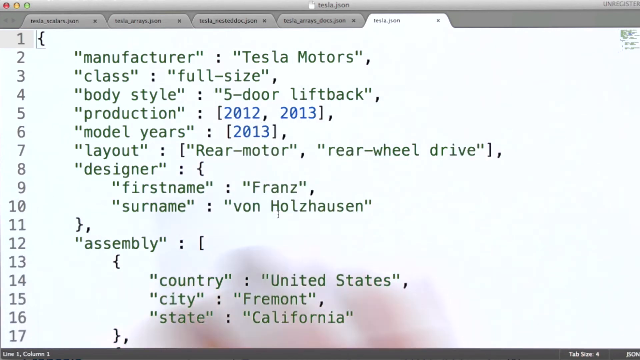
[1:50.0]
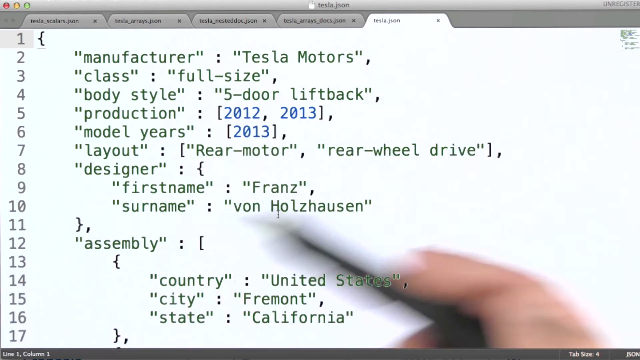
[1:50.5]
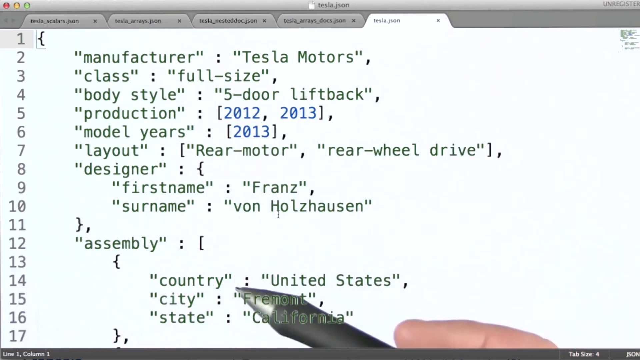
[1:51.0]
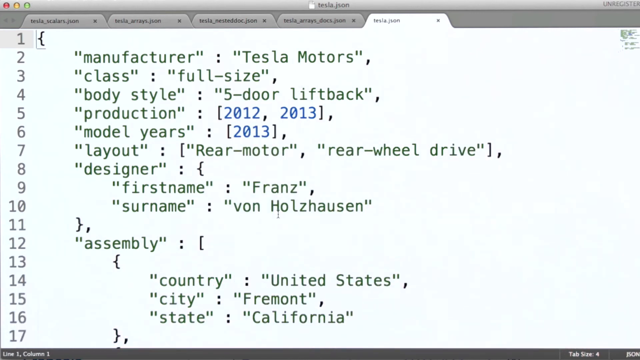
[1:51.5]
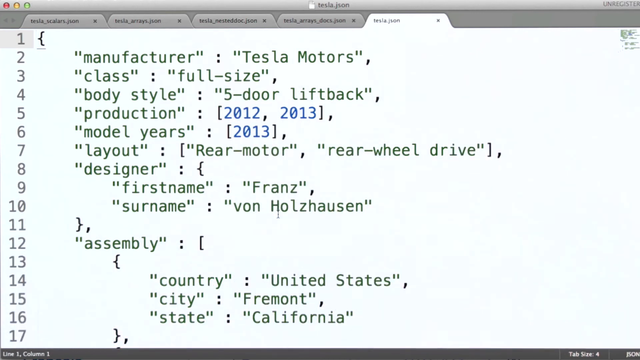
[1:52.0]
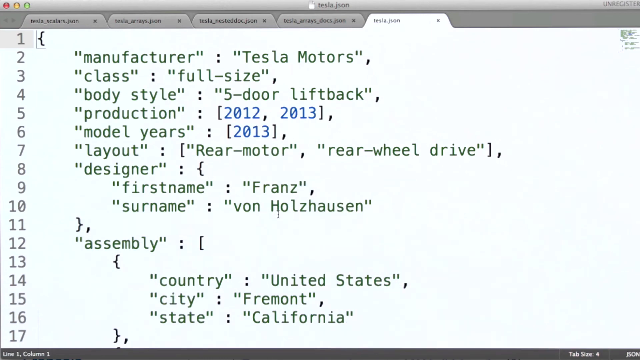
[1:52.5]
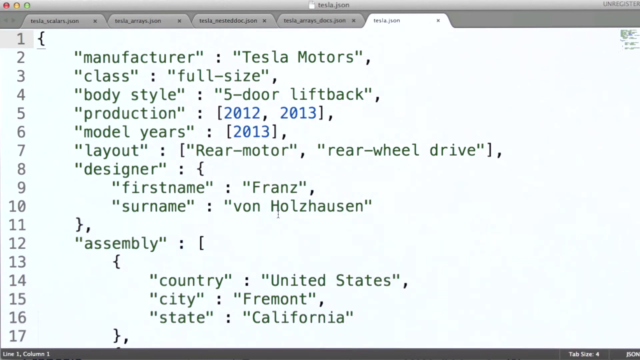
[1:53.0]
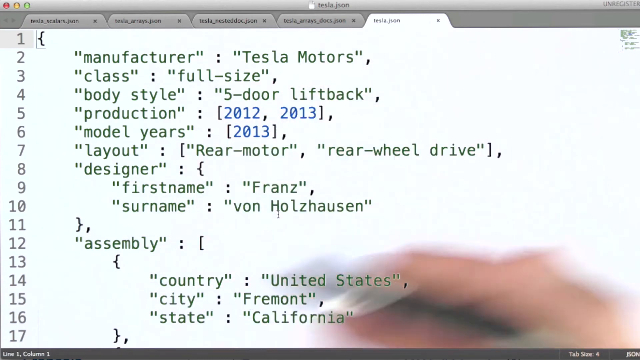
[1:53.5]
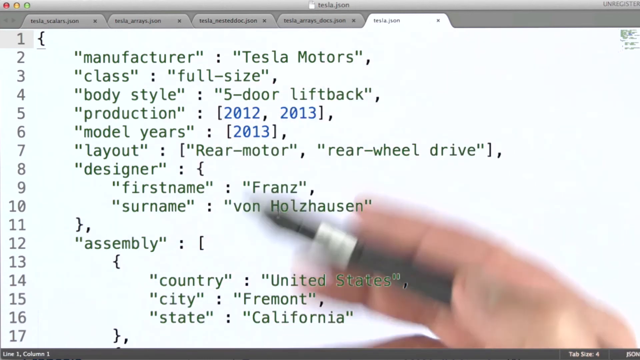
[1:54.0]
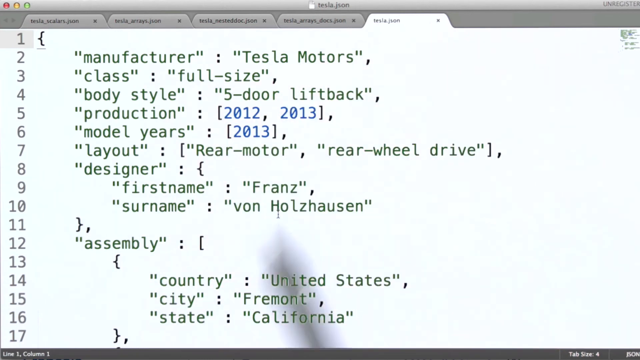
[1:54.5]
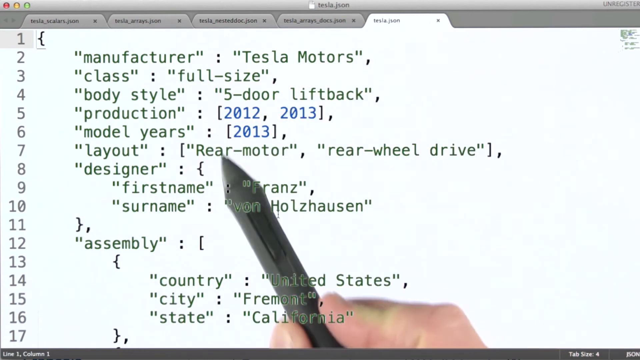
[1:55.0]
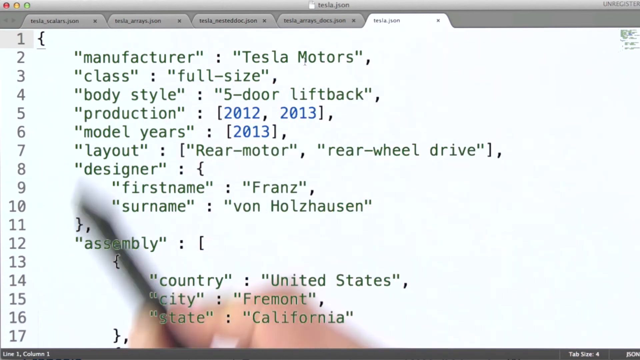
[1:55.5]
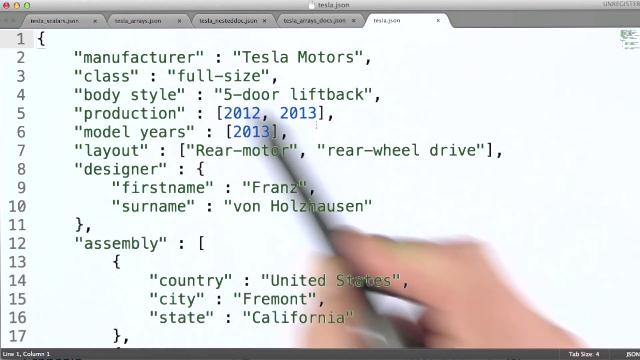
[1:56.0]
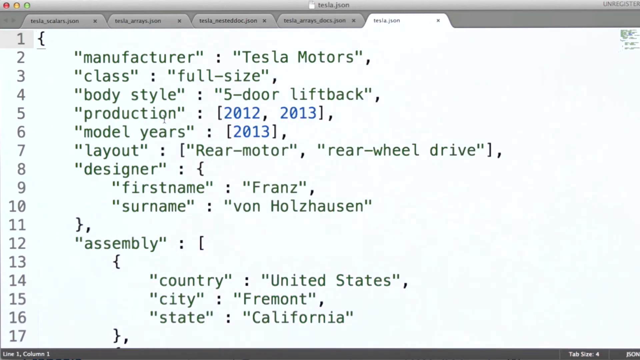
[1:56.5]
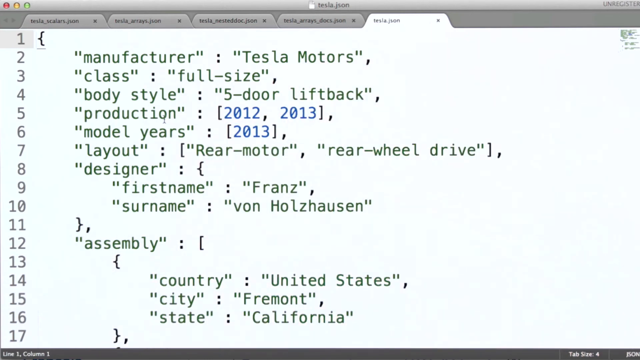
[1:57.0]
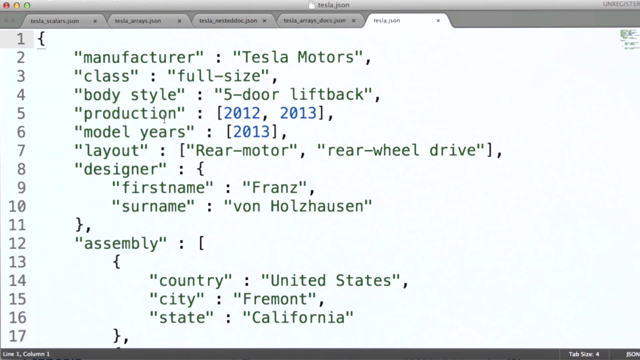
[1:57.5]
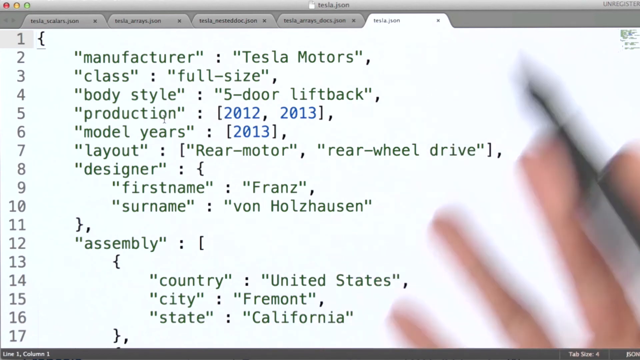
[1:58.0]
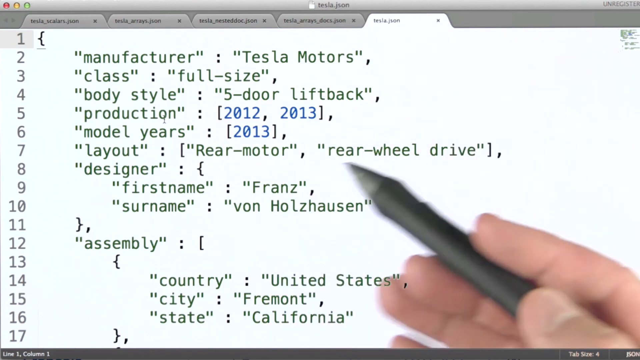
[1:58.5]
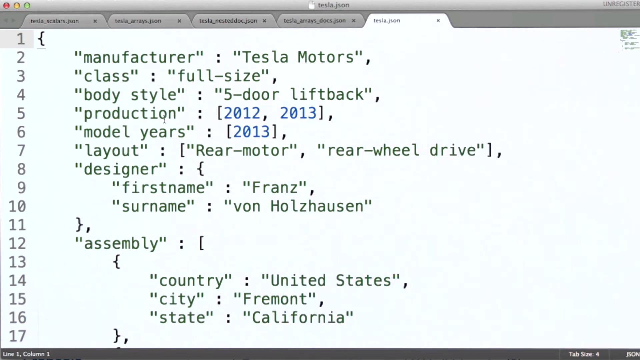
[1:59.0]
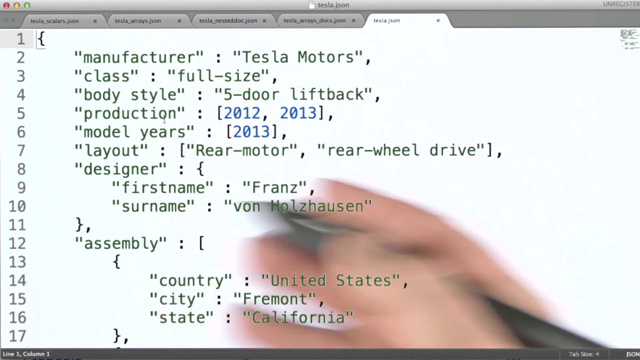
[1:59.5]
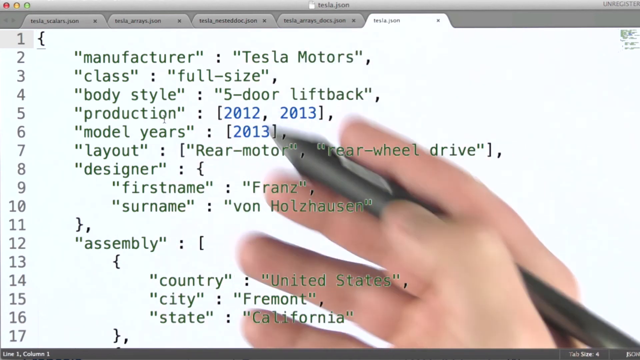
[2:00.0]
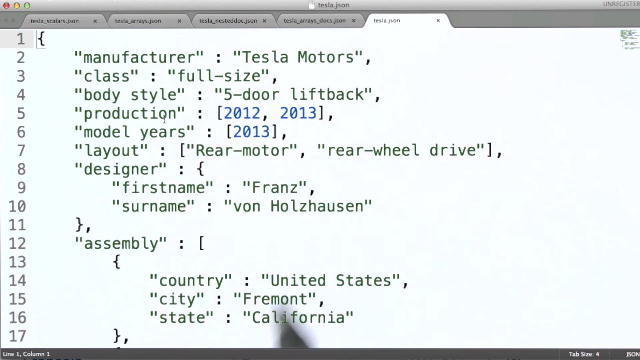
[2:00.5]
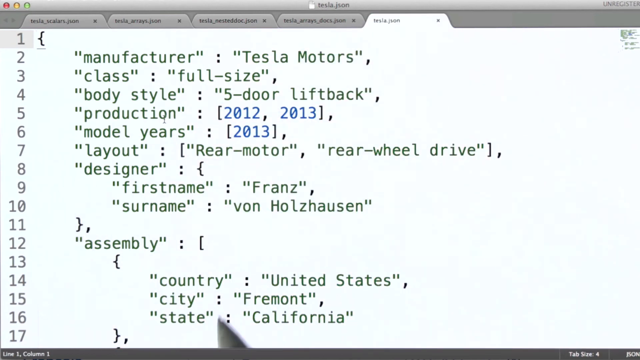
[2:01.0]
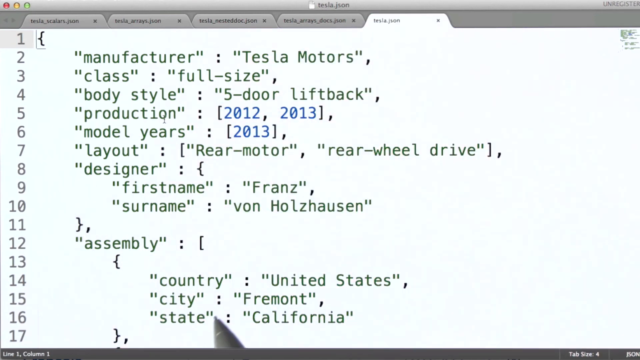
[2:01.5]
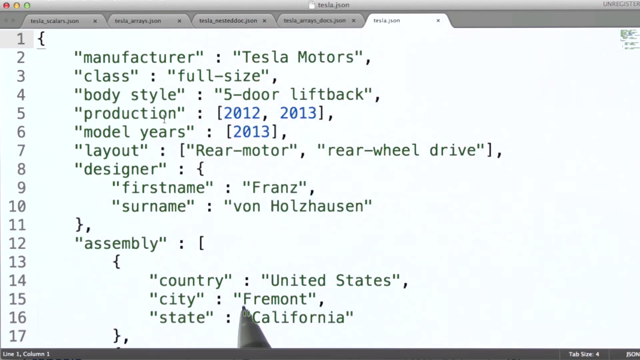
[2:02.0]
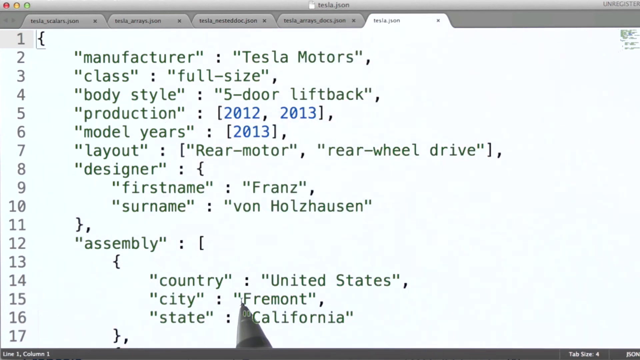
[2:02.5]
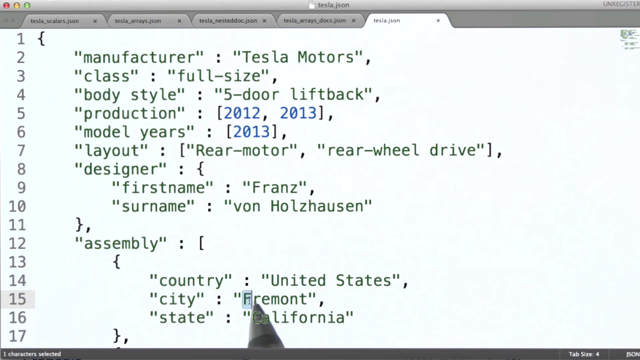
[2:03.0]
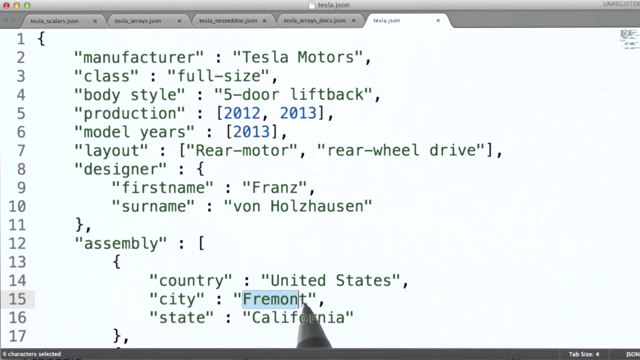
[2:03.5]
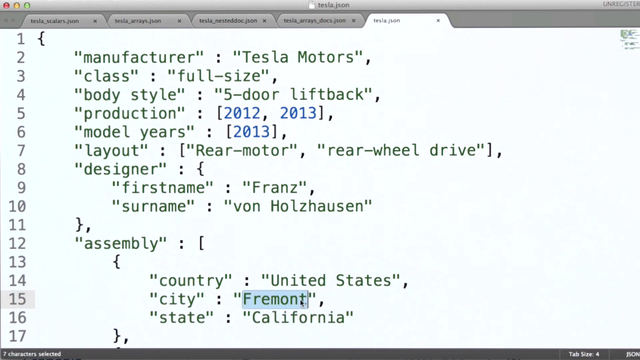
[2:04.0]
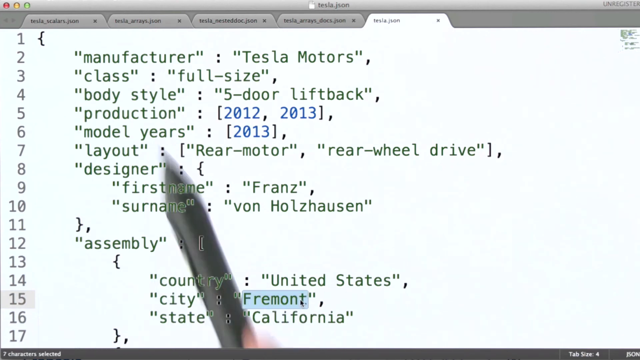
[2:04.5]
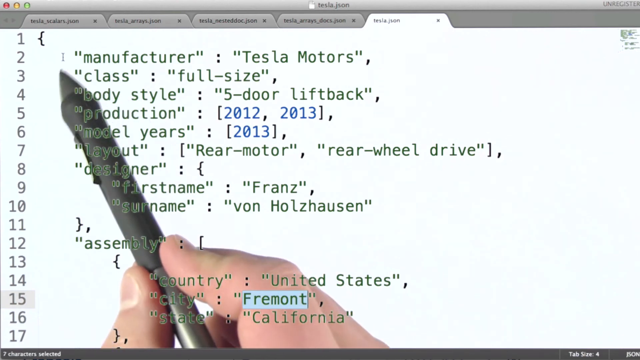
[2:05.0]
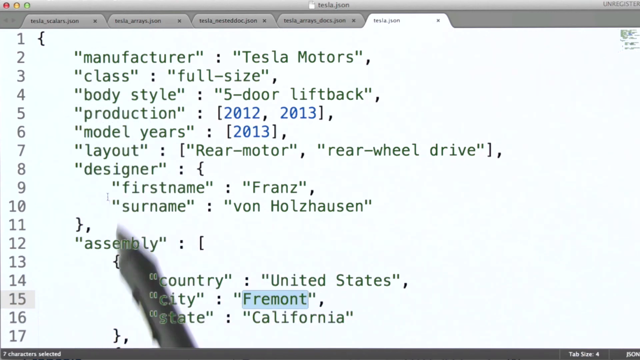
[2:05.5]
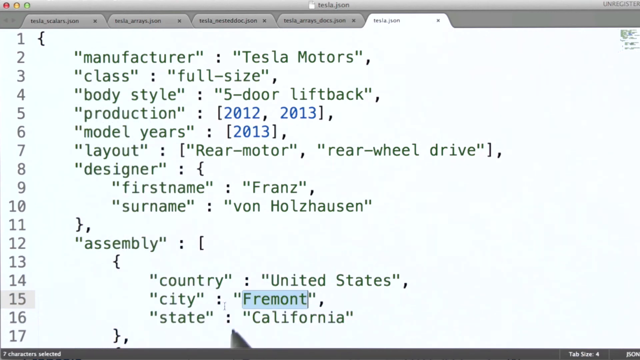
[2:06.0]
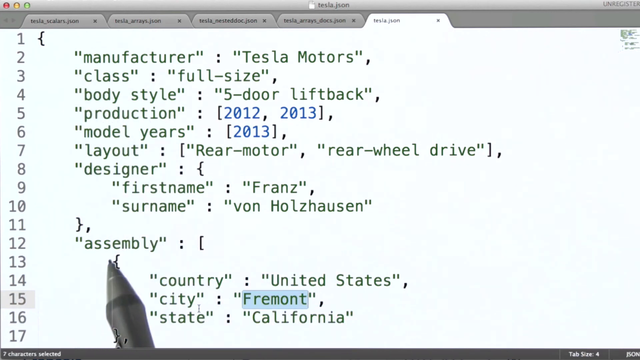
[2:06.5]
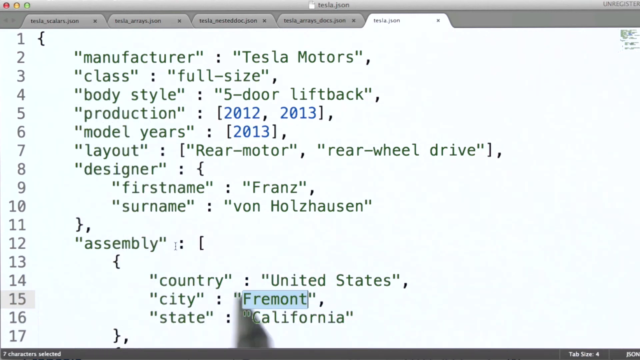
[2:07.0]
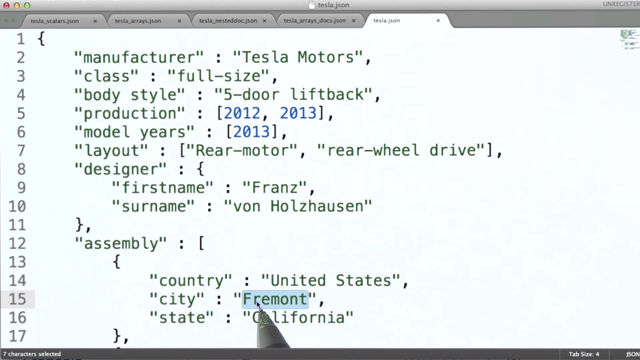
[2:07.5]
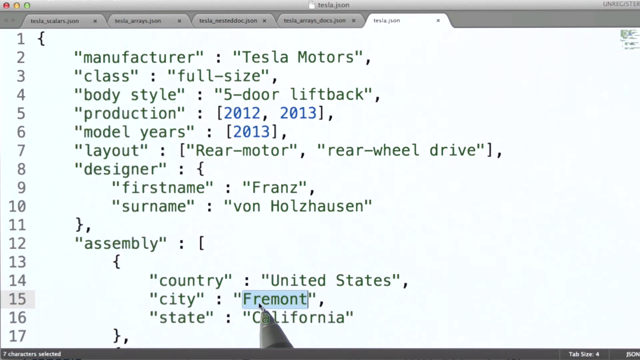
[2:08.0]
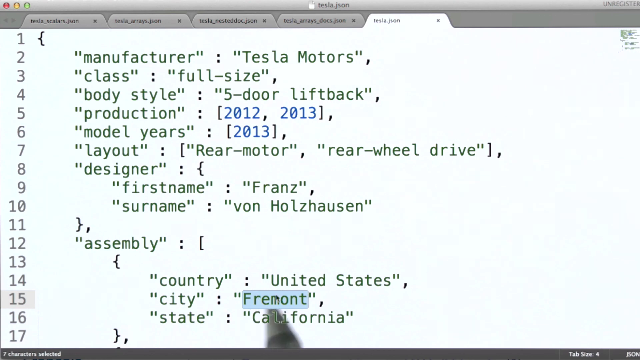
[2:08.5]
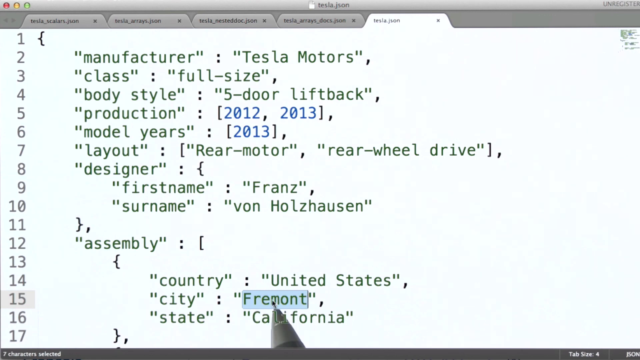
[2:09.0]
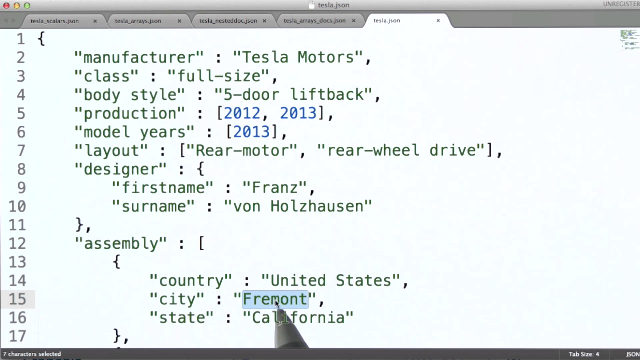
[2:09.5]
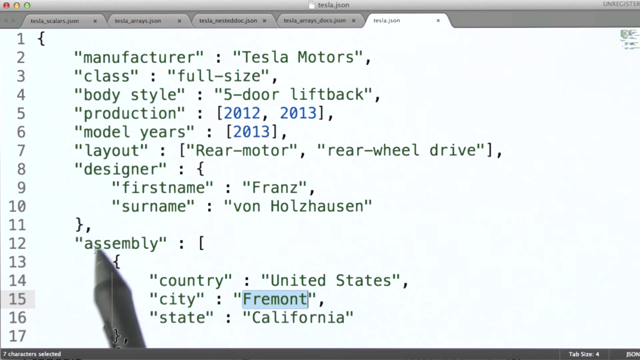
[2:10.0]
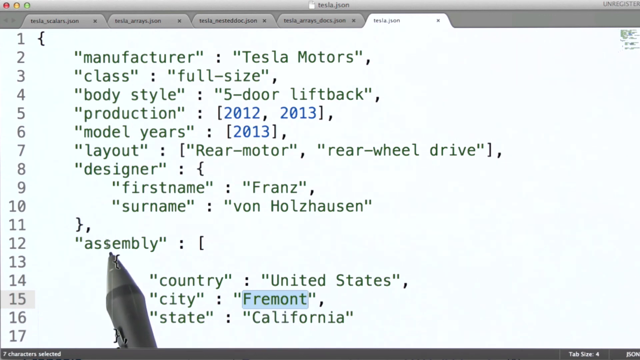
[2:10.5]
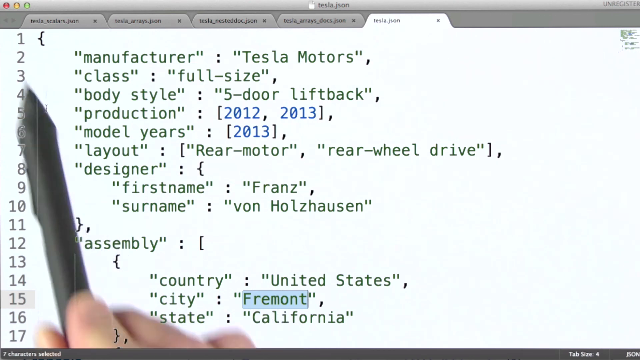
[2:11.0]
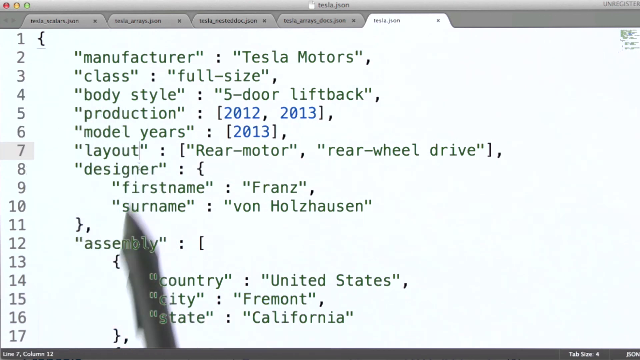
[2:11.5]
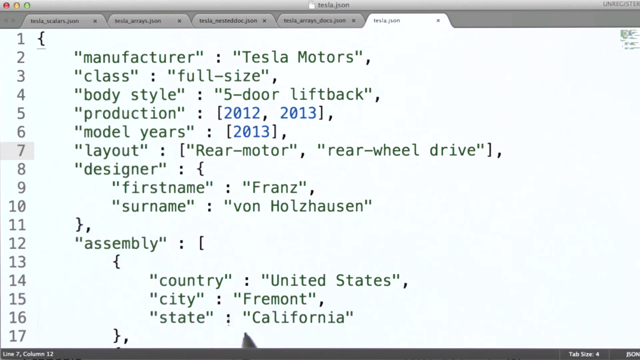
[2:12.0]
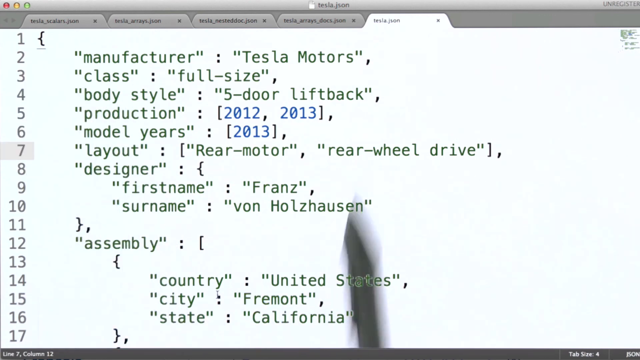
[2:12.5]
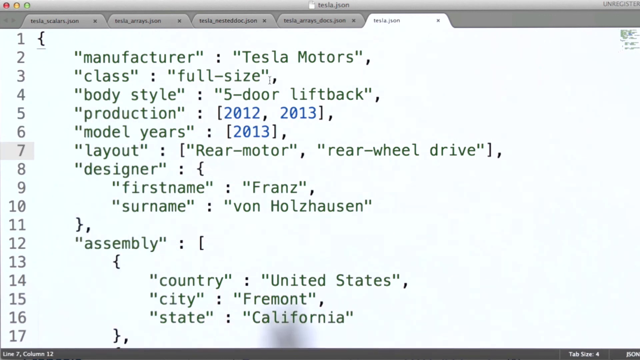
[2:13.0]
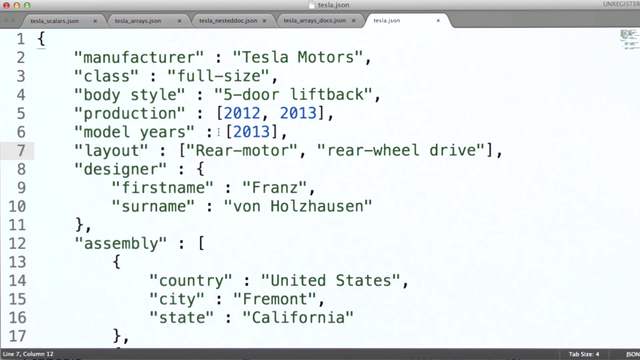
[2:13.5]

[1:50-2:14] The code for the Wikipedia page about the Tesla Model S is viewed closely, with the lines about the vehicle running from the top of the screen downward: "manufacturer": "Tesla Motors", "class": "full size", "body style": "five-door liftback", "production": [2012, 2013], "model years": [2013], "layout": ["rear motor", "rear wheel drive"], "designer": "first name": "Franz", "surname": "Van Holshausen". Further down it shows "assembly", "country": "United States", "city": "Fremont", "state": "California". This looks to be the development side of how a Wikipedia page is produced.